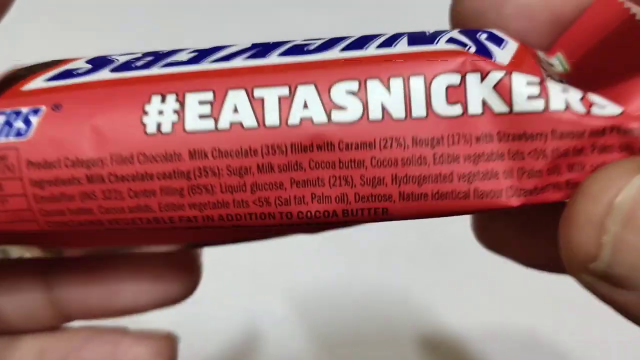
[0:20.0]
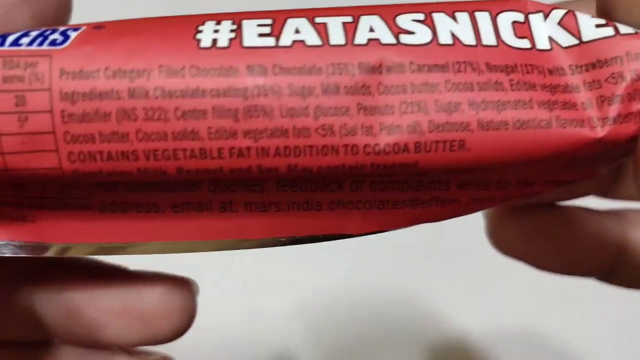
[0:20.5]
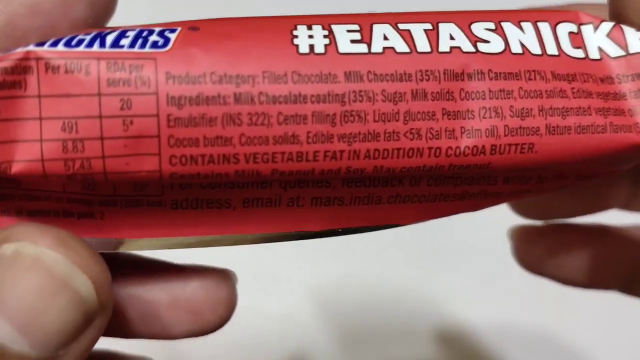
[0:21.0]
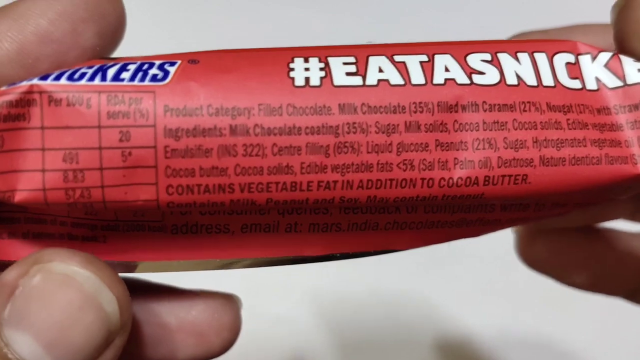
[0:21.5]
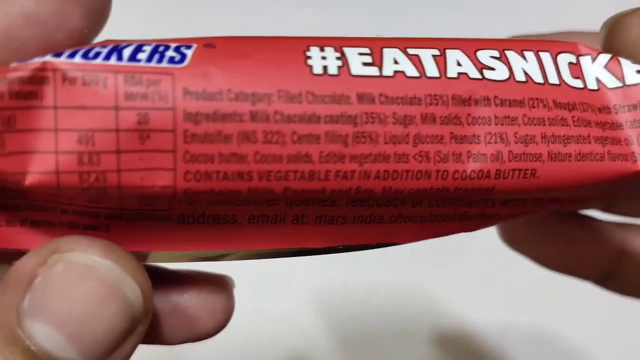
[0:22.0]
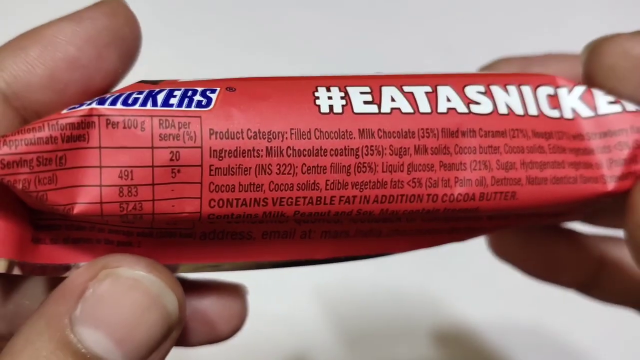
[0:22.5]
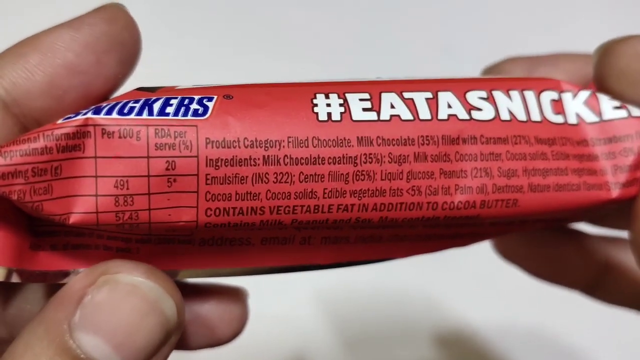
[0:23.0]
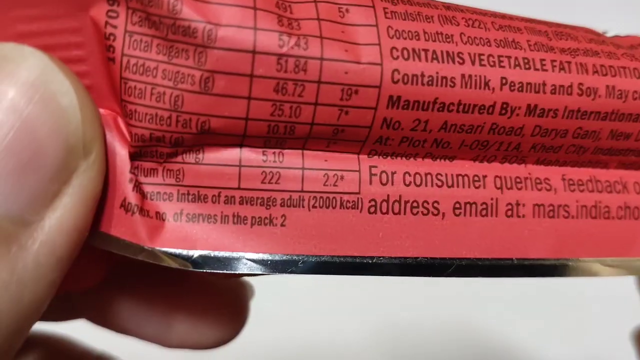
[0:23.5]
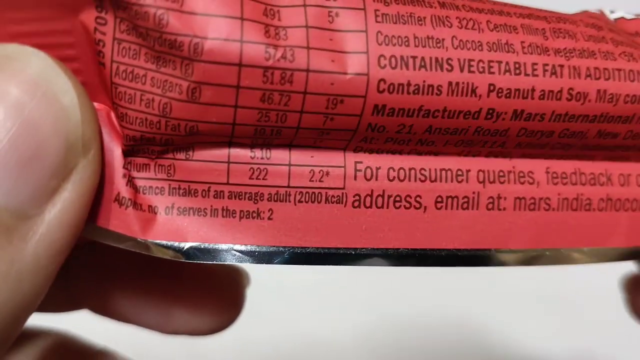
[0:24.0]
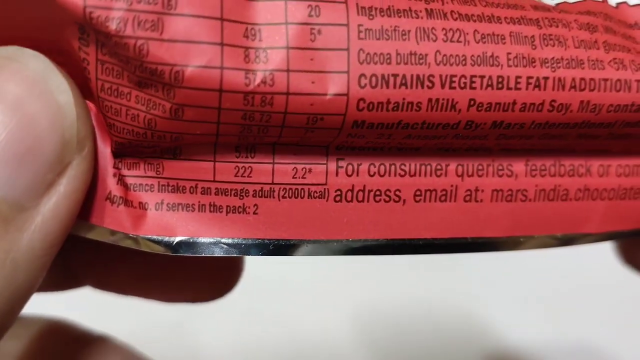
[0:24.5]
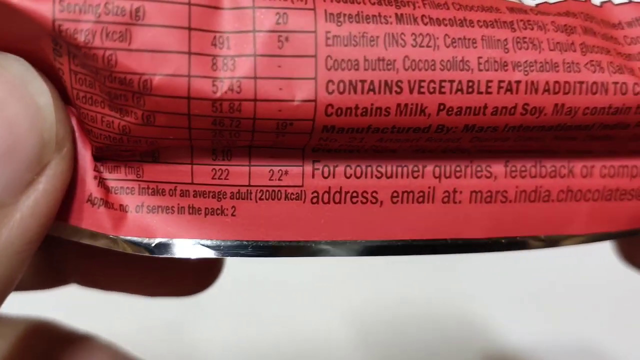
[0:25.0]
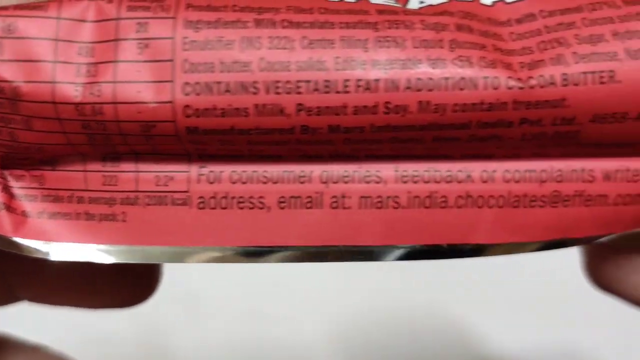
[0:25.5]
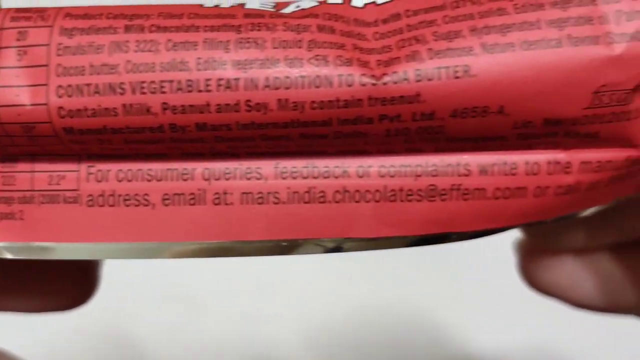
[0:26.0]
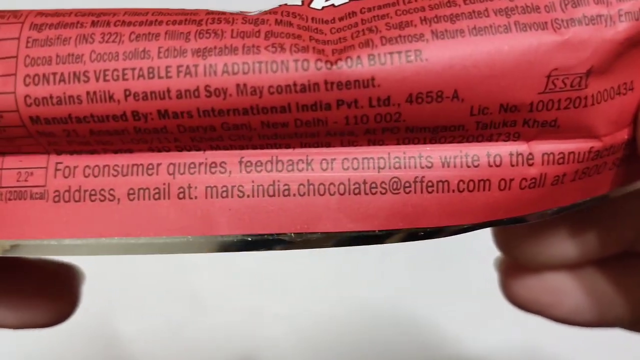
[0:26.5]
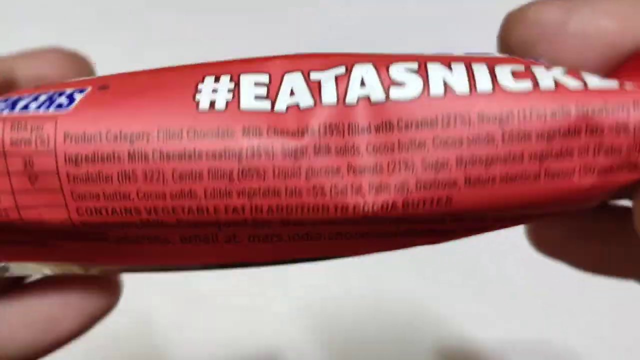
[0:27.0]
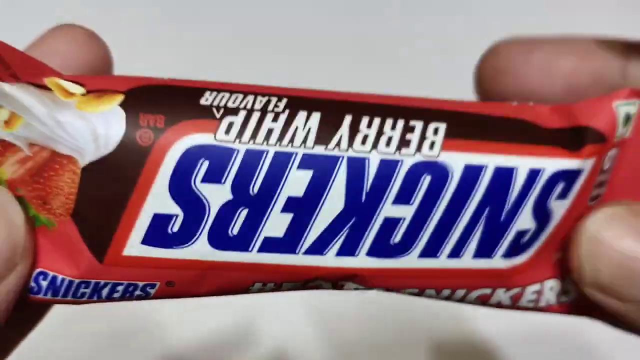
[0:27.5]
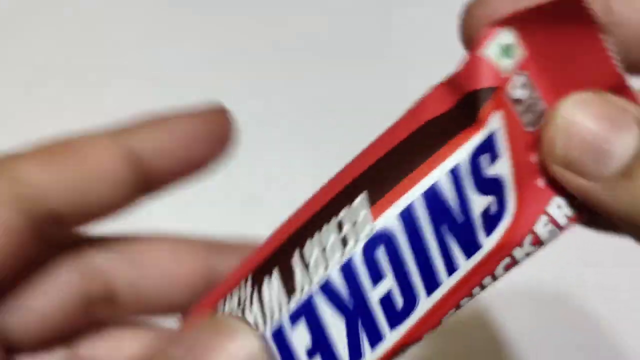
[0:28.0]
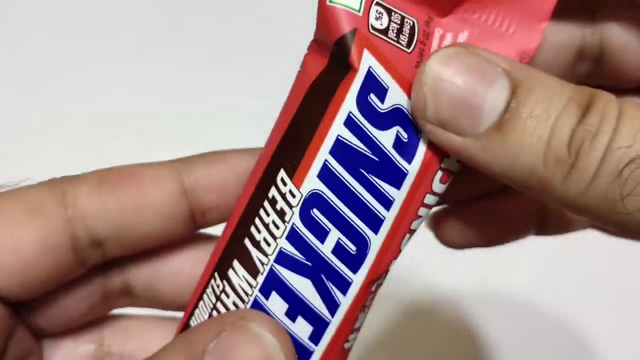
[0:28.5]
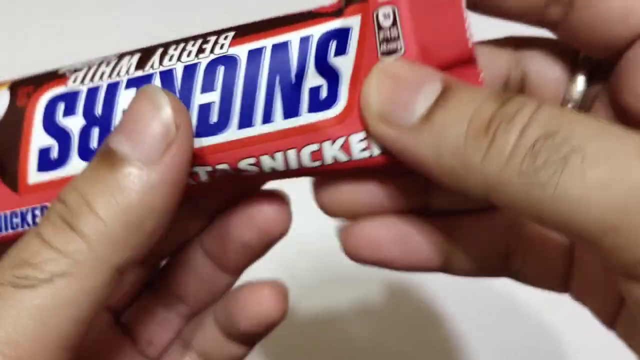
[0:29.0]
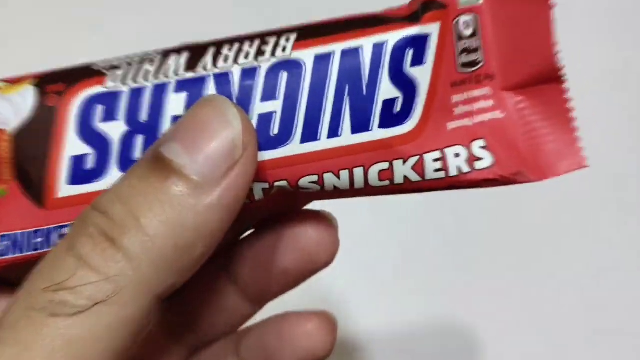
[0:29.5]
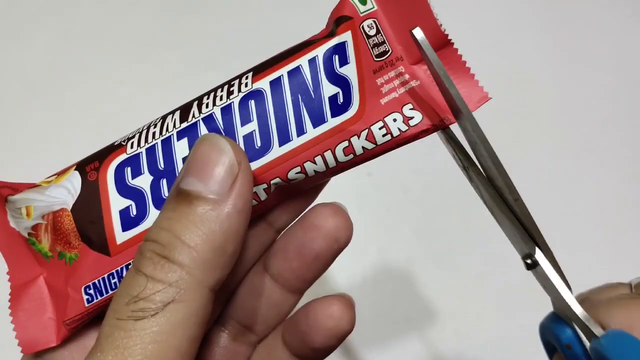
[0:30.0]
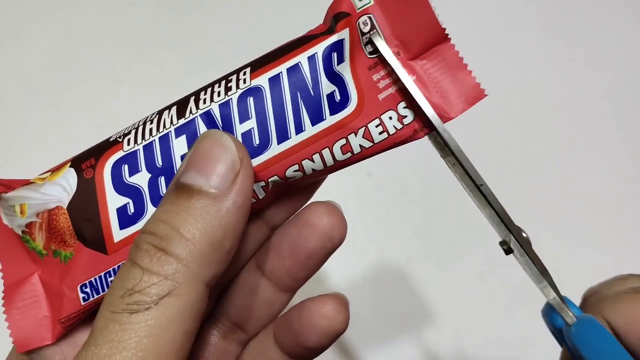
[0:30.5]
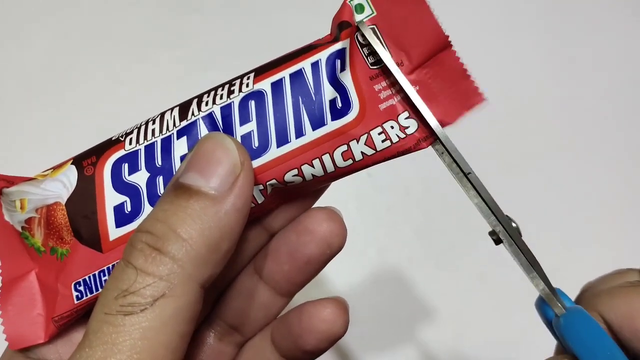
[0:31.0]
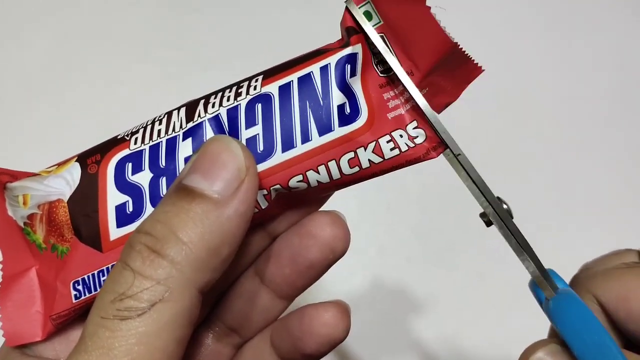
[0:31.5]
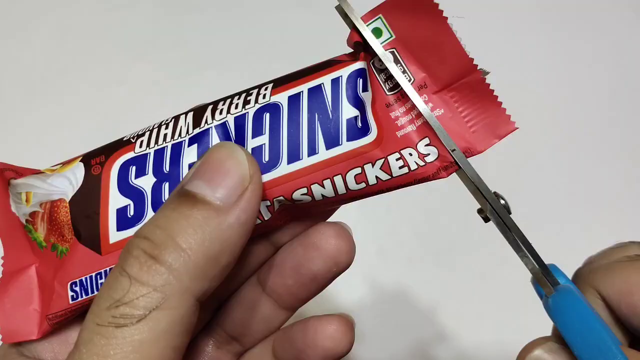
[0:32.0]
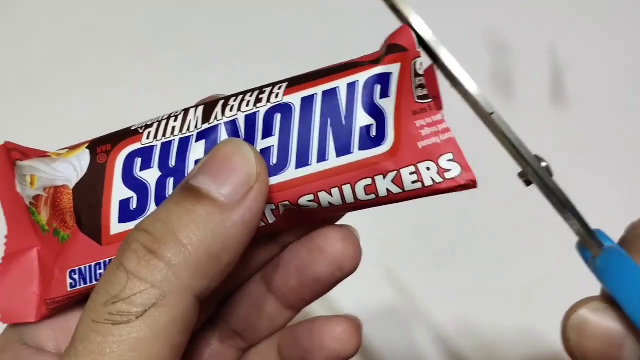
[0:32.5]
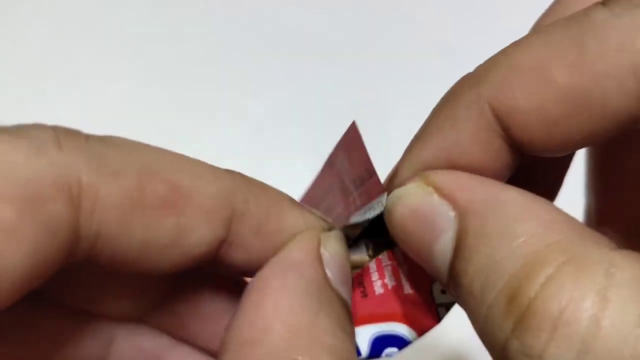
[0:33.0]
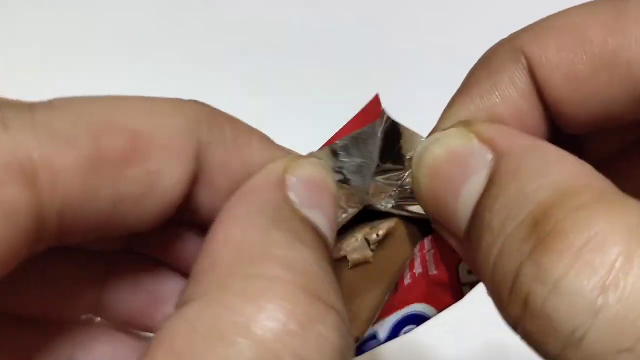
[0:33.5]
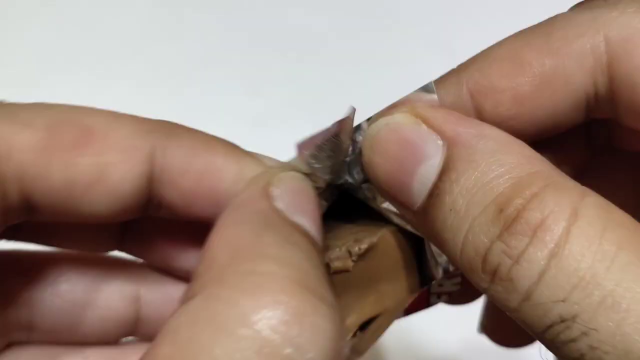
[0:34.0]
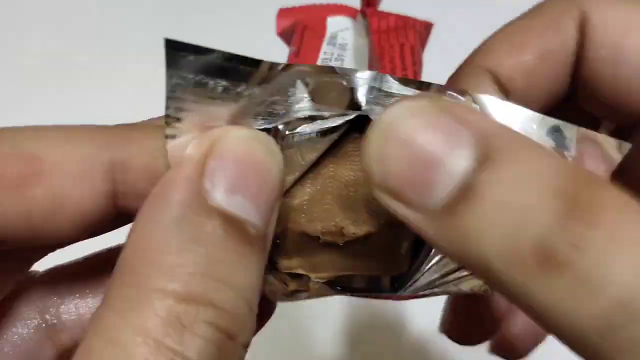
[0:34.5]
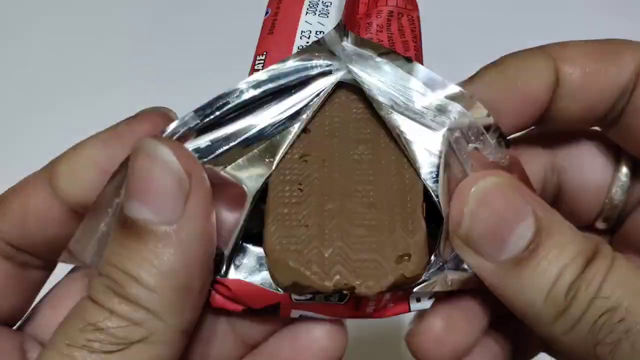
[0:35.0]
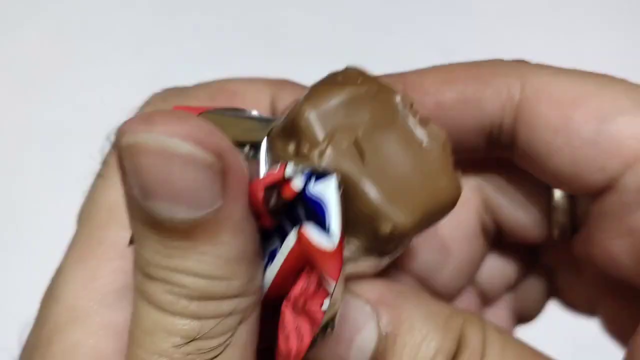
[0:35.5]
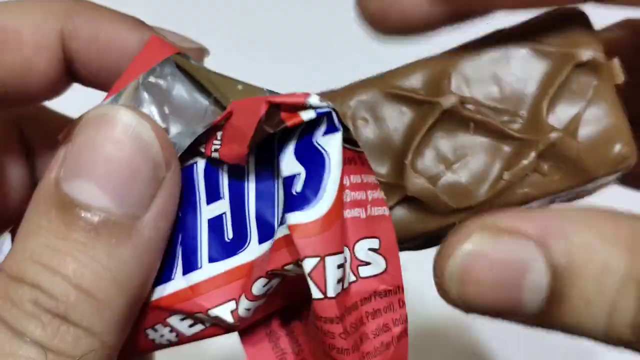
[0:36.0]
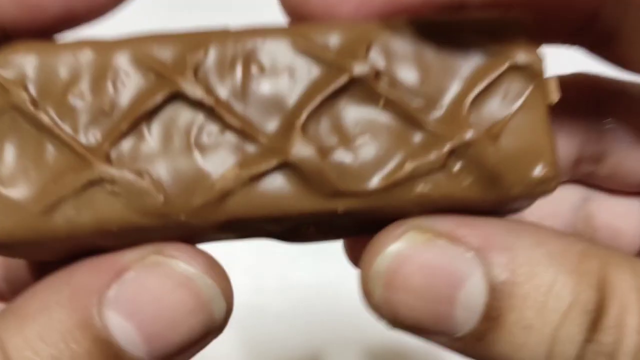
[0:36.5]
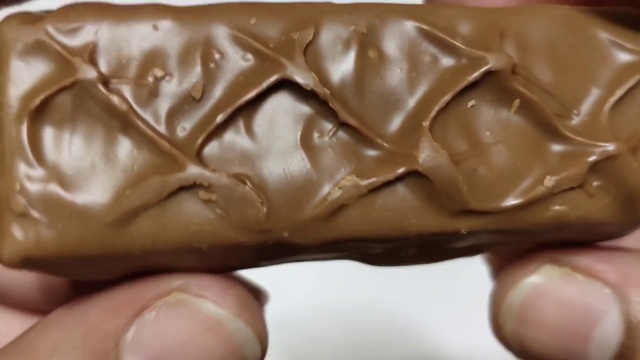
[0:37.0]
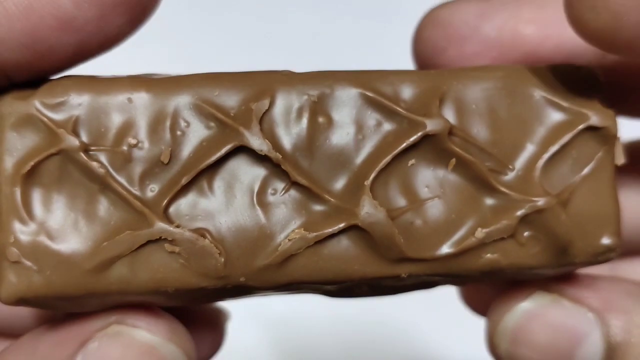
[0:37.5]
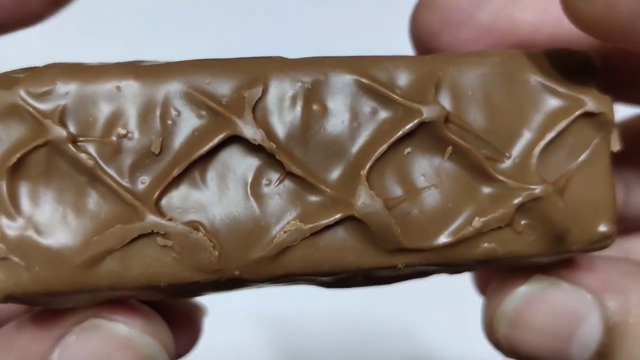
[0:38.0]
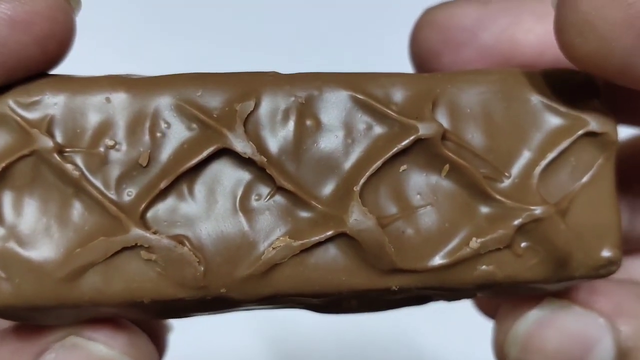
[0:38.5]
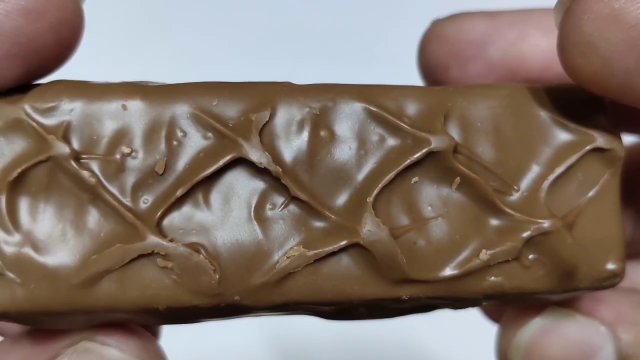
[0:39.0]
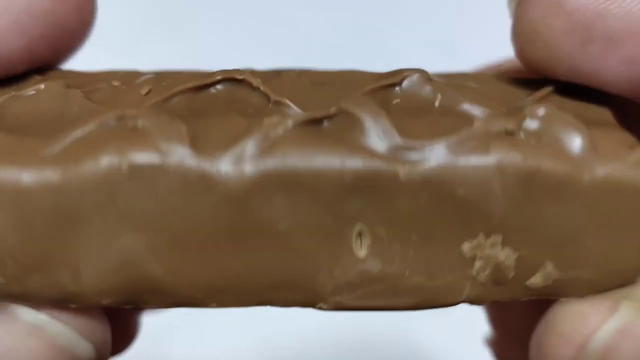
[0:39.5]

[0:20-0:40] In what looks like a showcase, a red and pink Snickers bar is seen in close-up, with fingers holding it. At the beginning, the hands on the left and right show the top of the bar, where white text reads "#eat Snickers". The middle flap is pulled down to show the nutrition facts and ingredients, written in black on the red wrapping. The right hand takes out a blue pair of scissors and cuts the right side of the package, then turns it around and peels off the back of the package, revealing tin or aluminum inside. The whole chocolate bar is taken out; it looks light brown, and its back looks like it has ridges of chocolate.